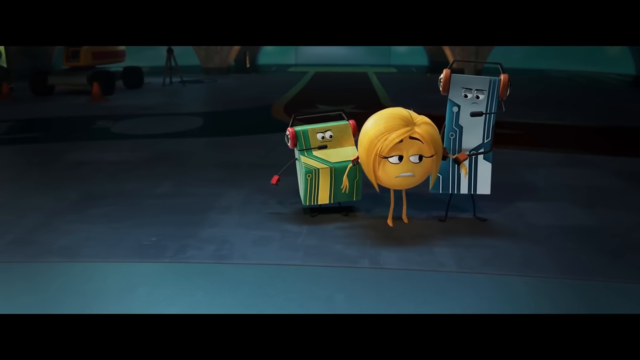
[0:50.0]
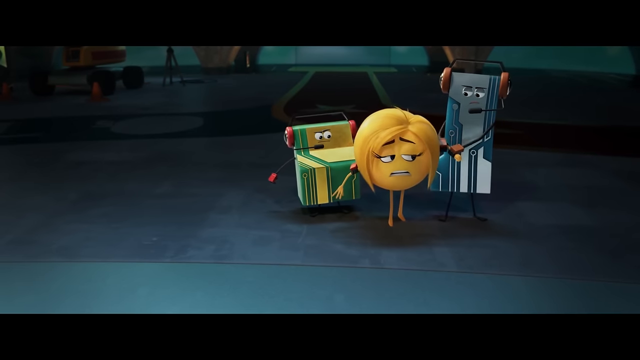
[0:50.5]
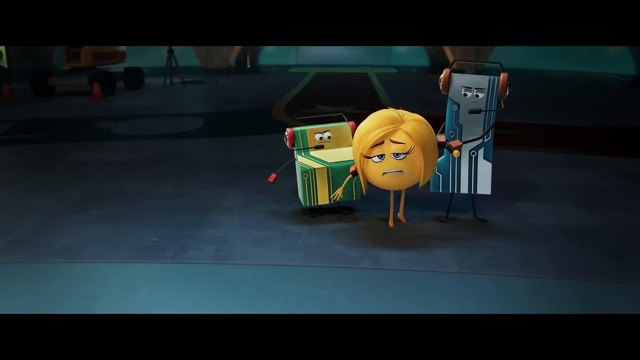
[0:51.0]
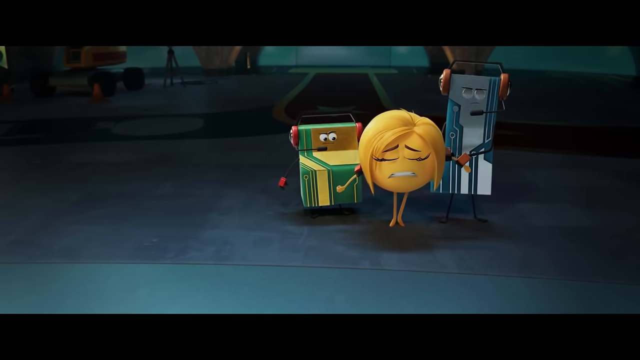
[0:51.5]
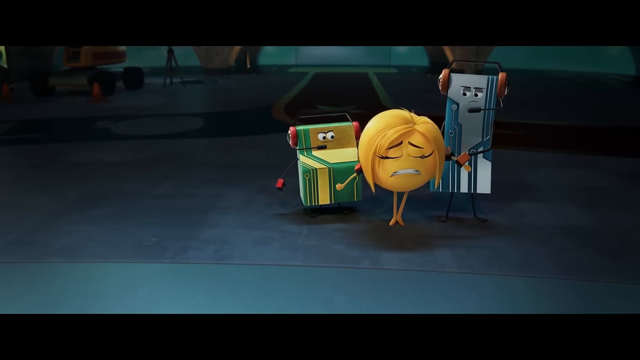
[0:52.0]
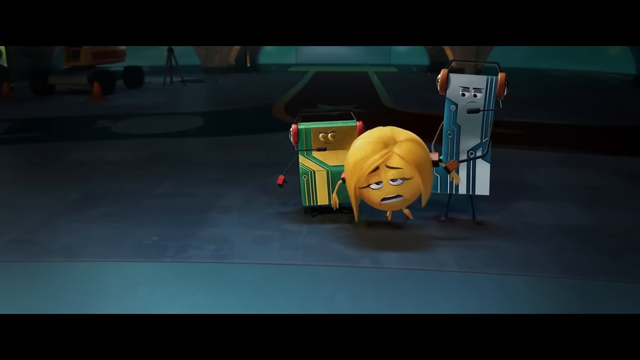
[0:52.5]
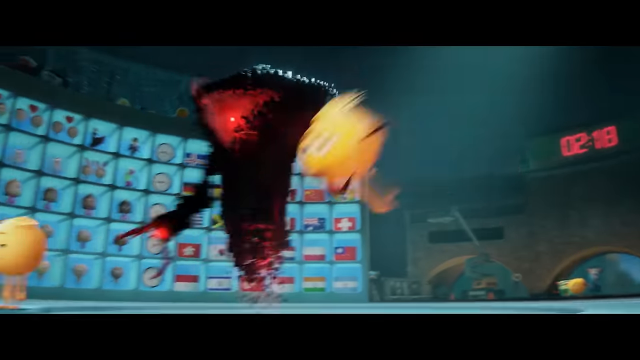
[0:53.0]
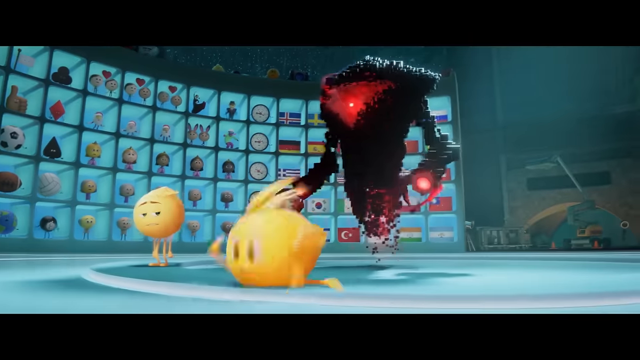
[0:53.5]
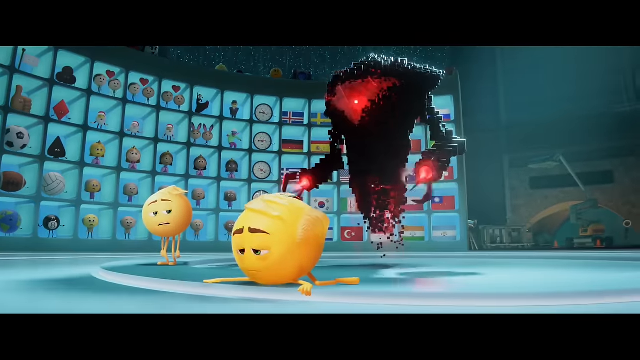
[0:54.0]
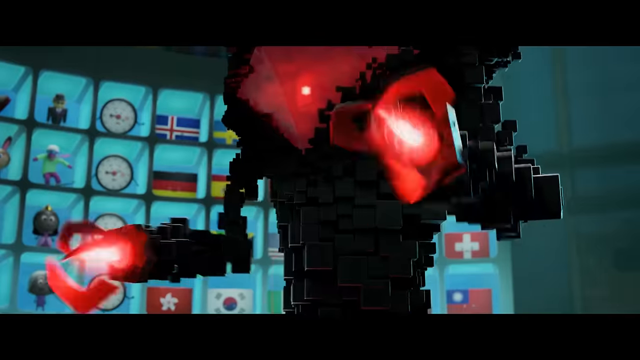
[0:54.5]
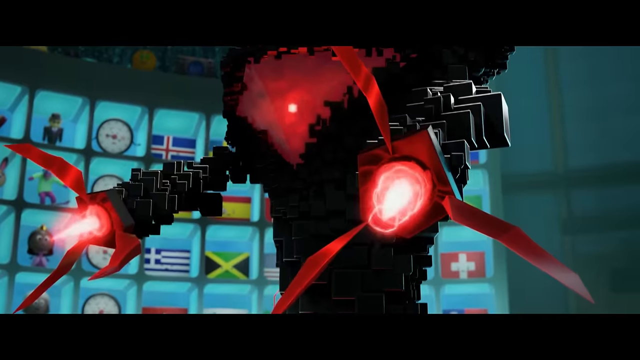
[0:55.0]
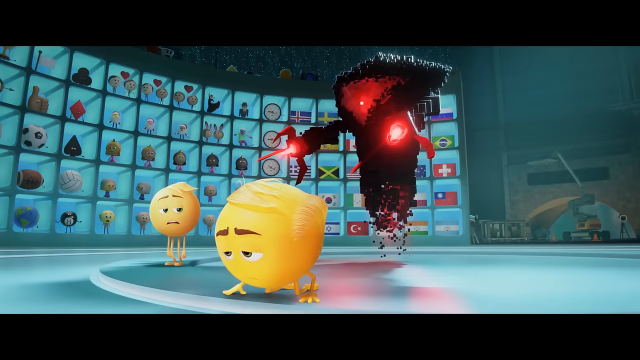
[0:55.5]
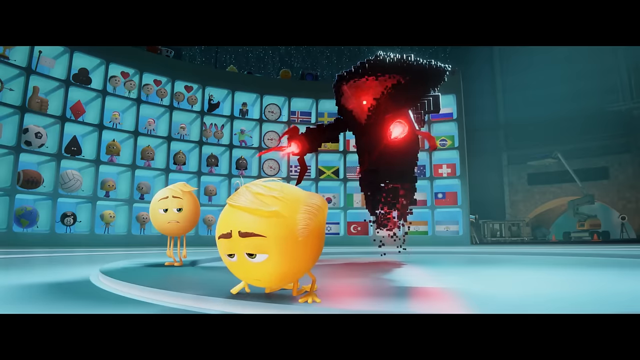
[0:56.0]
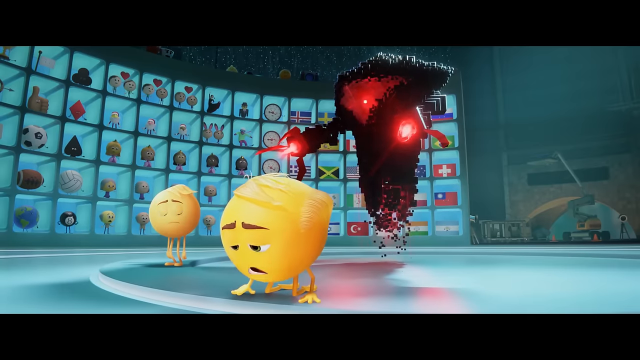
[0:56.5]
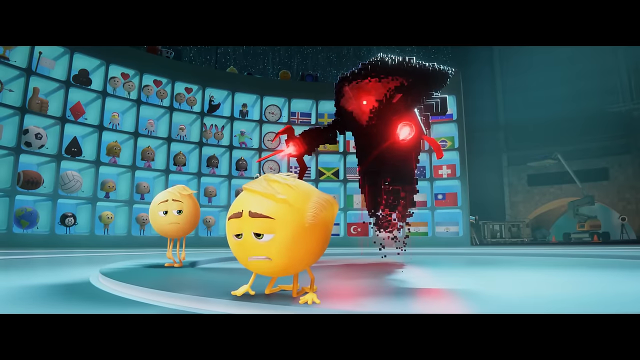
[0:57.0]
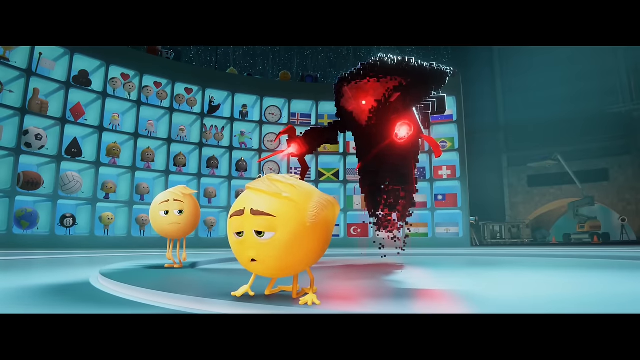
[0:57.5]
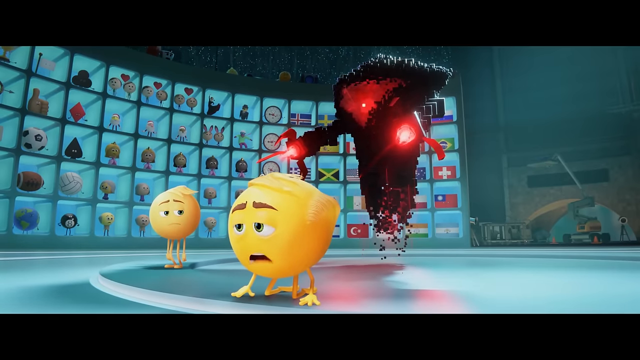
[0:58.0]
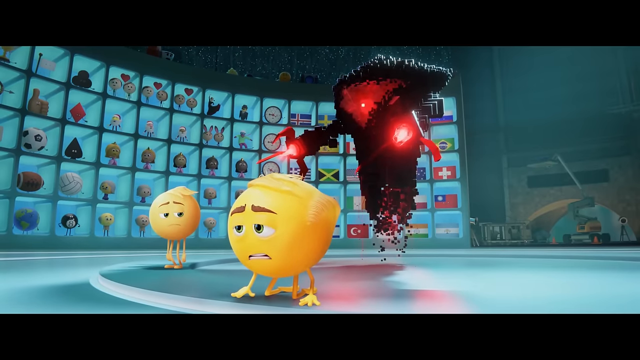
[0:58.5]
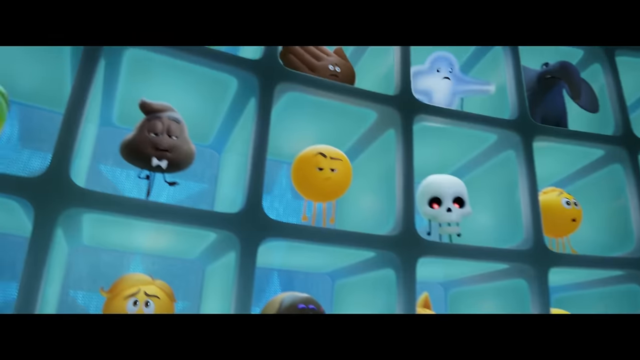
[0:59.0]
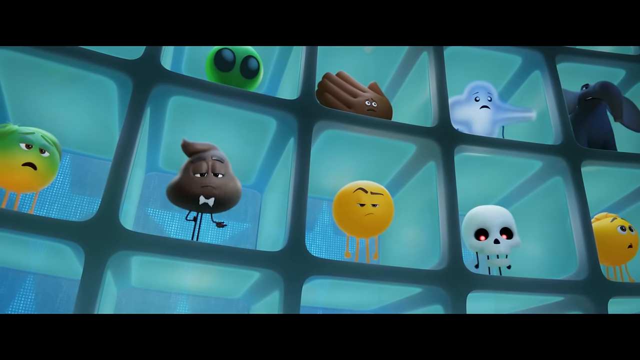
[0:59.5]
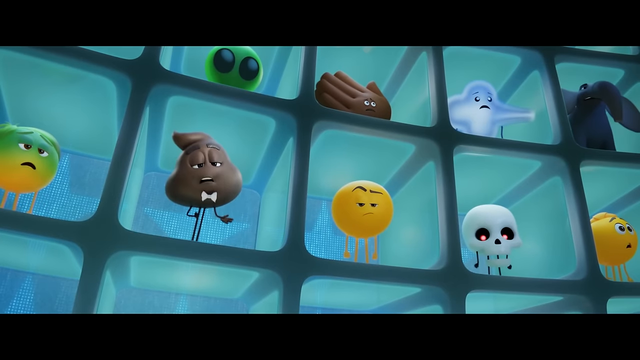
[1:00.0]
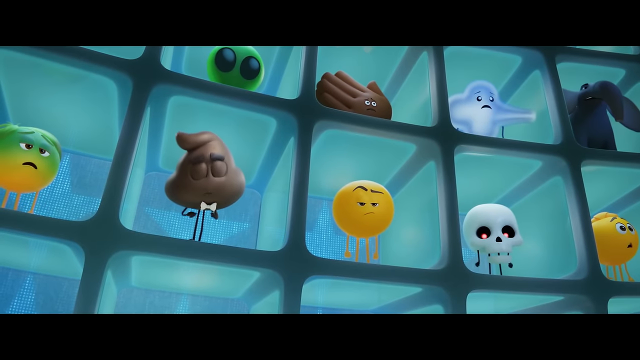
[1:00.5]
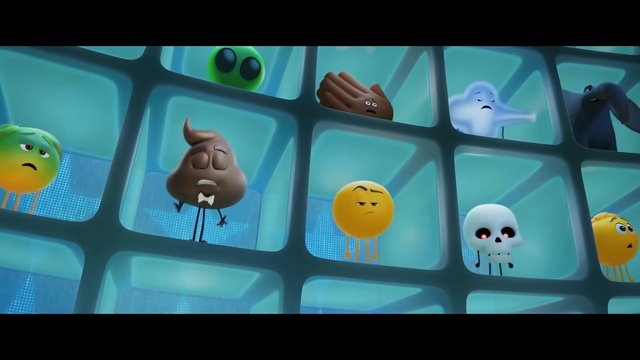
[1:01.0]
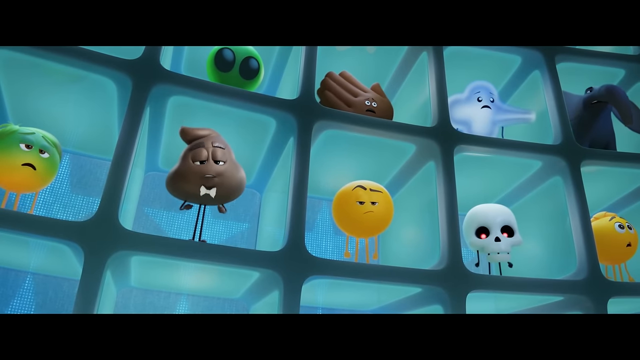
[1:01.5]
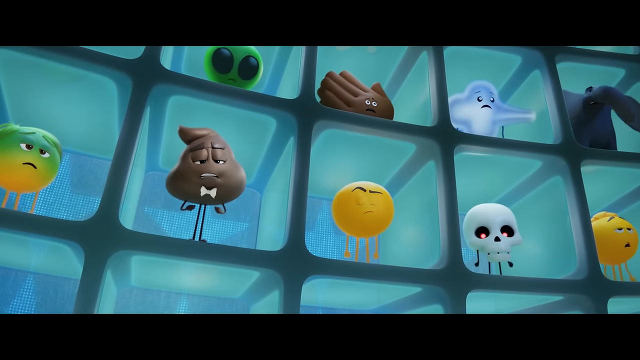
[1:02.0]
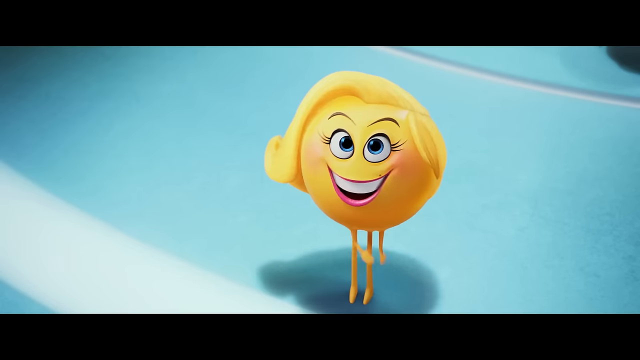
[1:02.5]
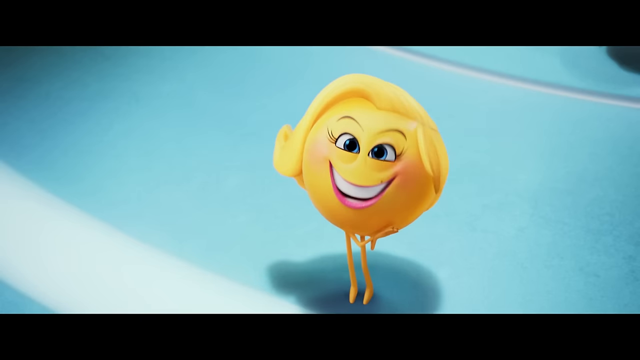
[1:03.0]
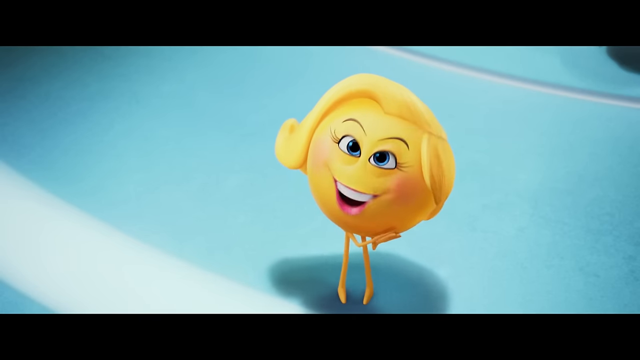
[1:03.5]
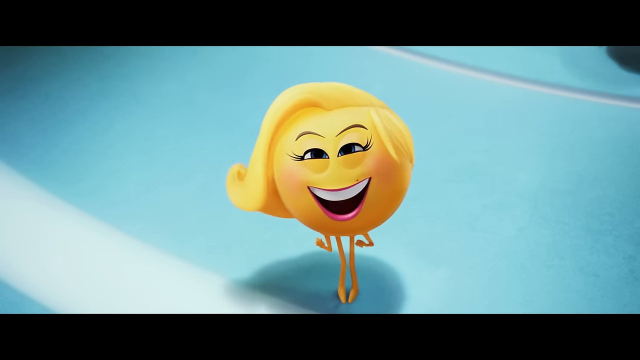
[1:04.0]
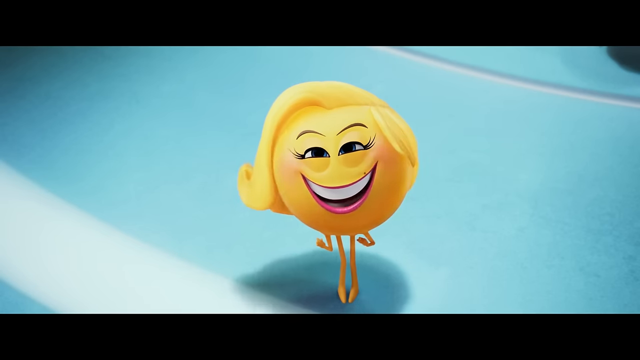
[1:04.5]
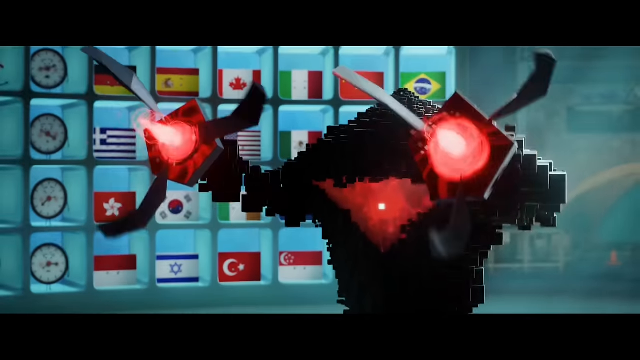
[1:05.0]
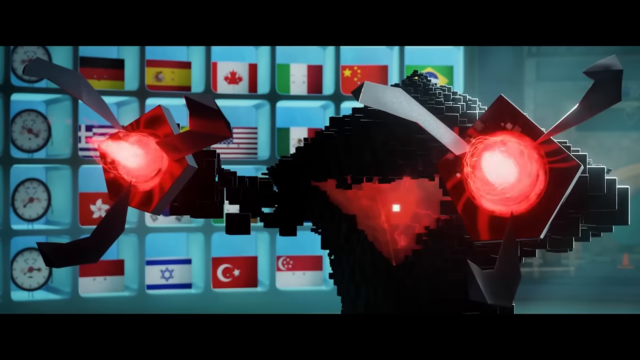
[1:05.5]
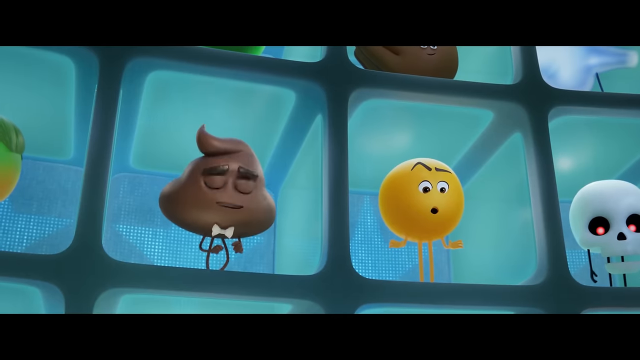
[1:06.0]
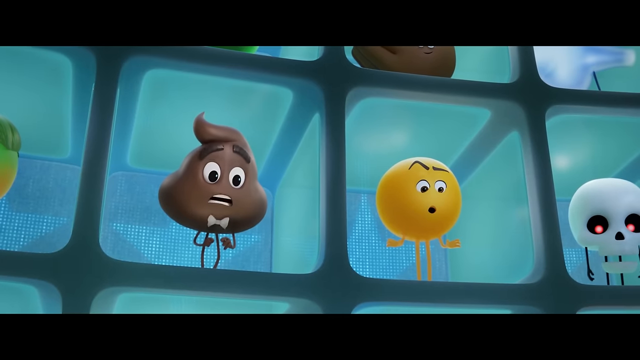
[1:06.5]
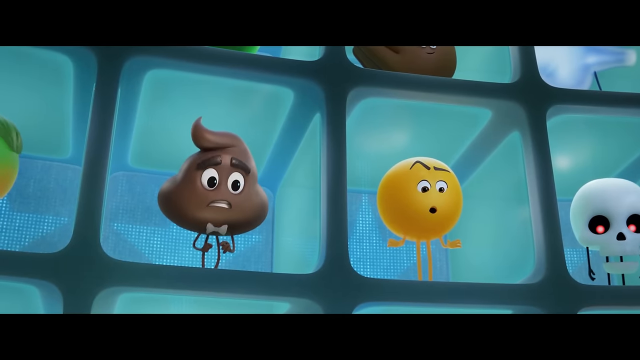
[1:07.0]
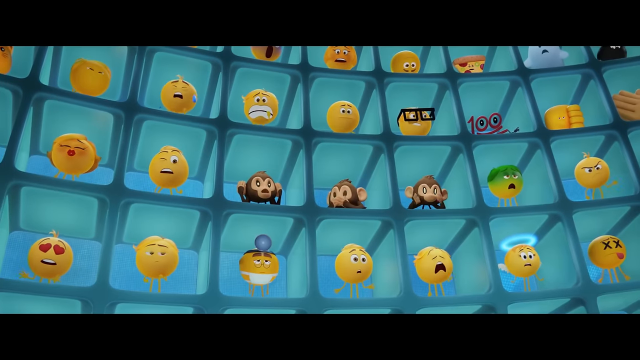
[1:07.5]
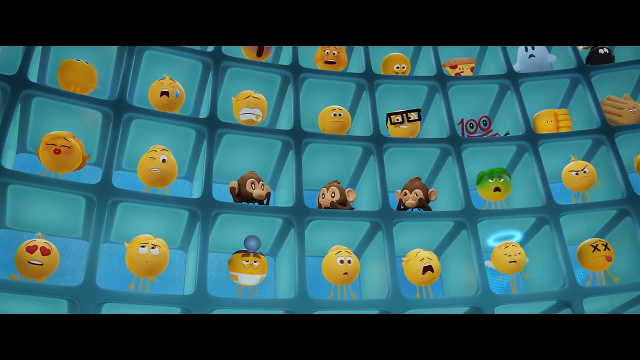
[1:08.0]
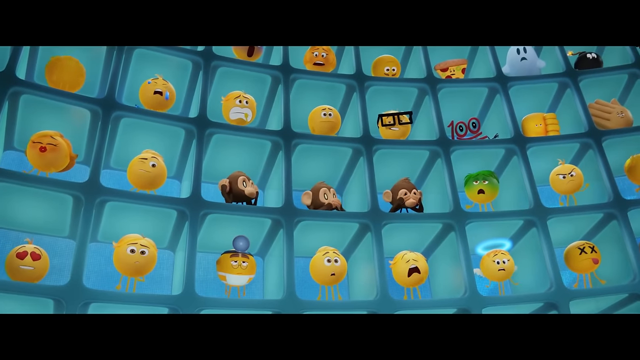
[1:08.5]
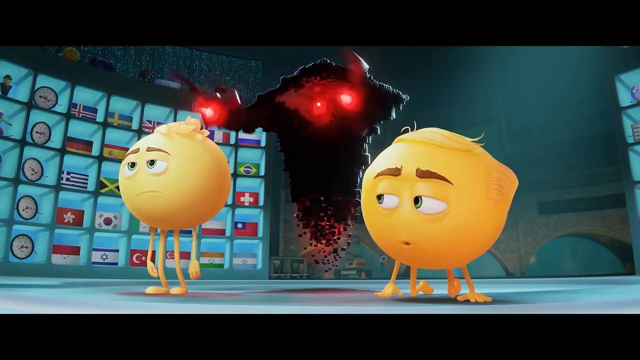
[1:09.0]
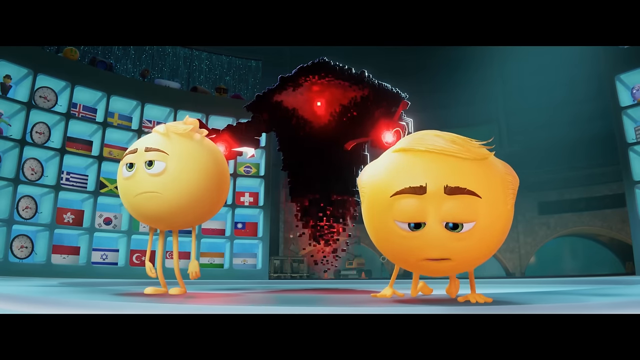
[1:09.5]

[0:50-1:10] The two robots hold the female emoji until she submits. The robot holds two flaming red blasters. The emojis in the locked chambers speak up, but the robot turns its blaster and points it at them, and their facial expressions change from curious to scared, apparently fearing they will be killed by the black robots. There are monkey emojis in the locked chambers as well, along with dogs, food and flags; most of them are locked except for the few trying to stop Smiler. The robot is built from small cubes packed together to form a floating robot; it is black, with red blasters on its hands and a red eye. There is a green alien emoji with thin black eyes, and beneath it is a brown shit emoji with a white bow tie, which was the one talking when the robot pointed its blaster at it.